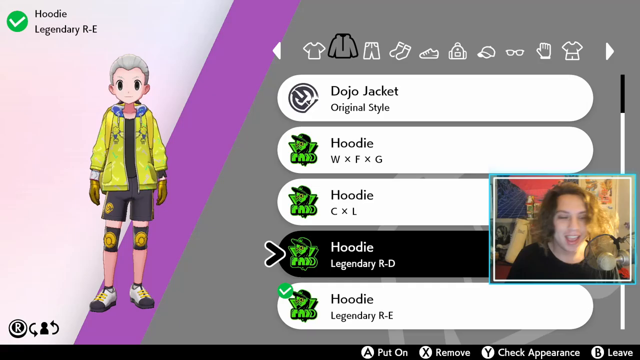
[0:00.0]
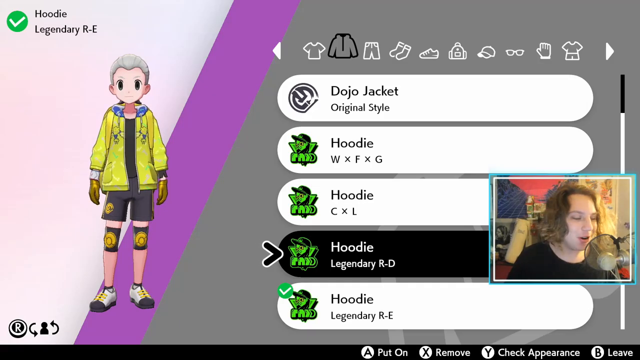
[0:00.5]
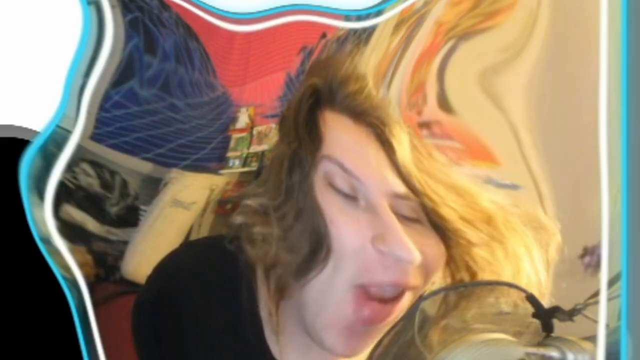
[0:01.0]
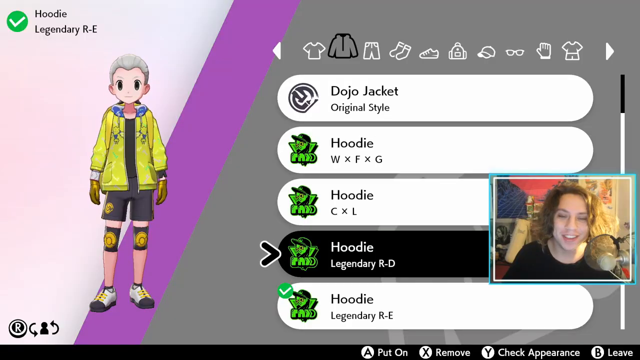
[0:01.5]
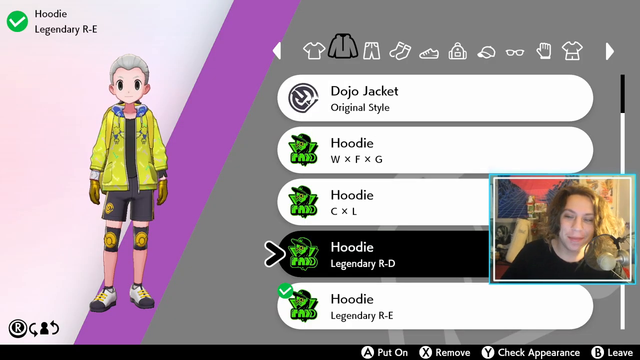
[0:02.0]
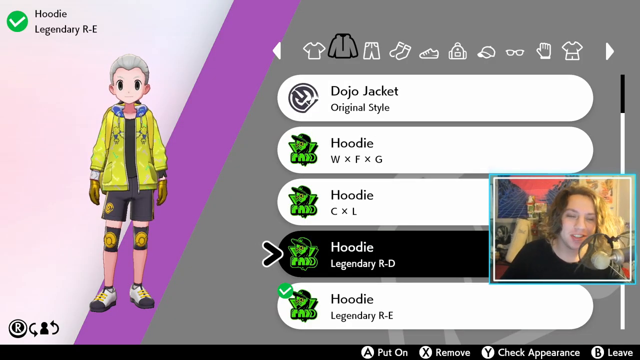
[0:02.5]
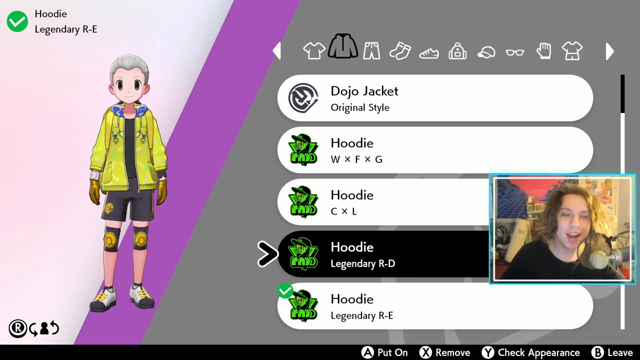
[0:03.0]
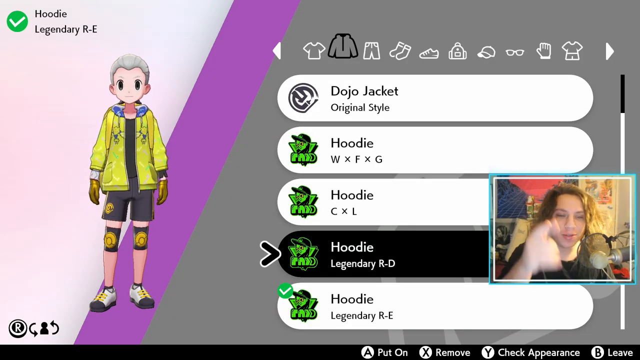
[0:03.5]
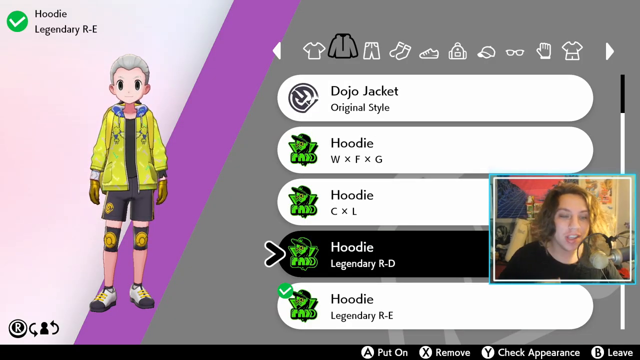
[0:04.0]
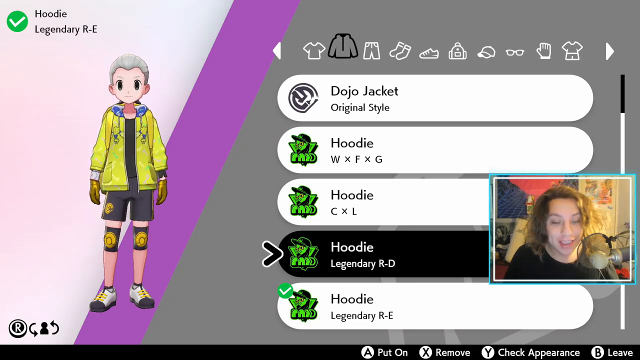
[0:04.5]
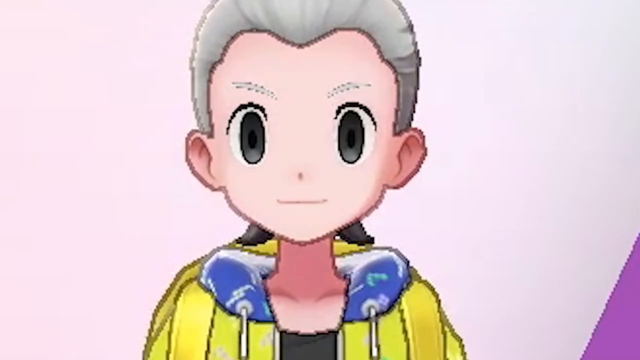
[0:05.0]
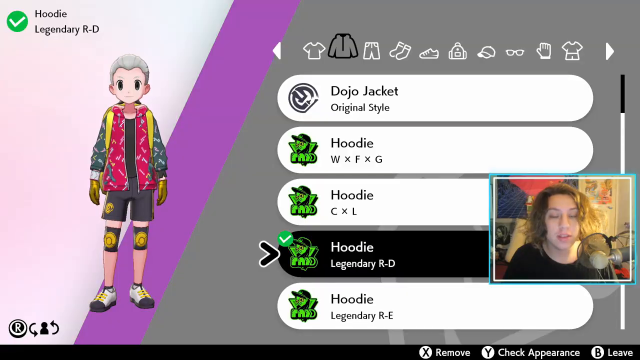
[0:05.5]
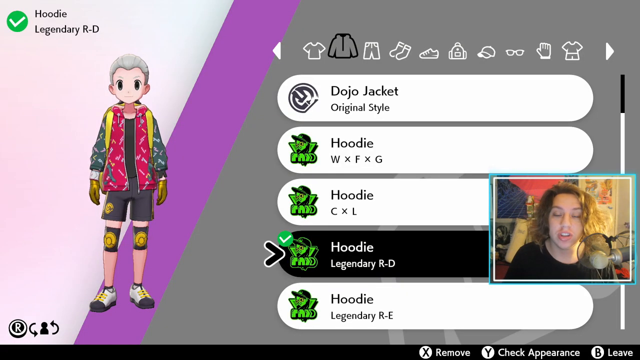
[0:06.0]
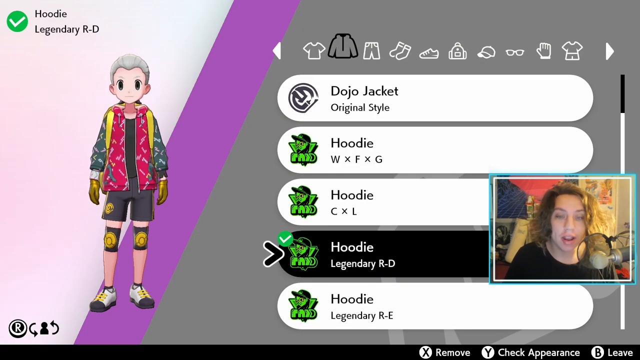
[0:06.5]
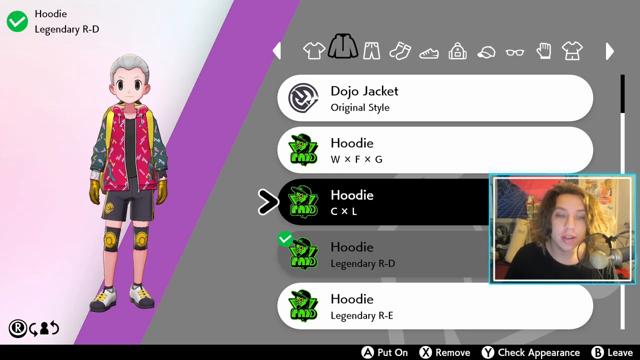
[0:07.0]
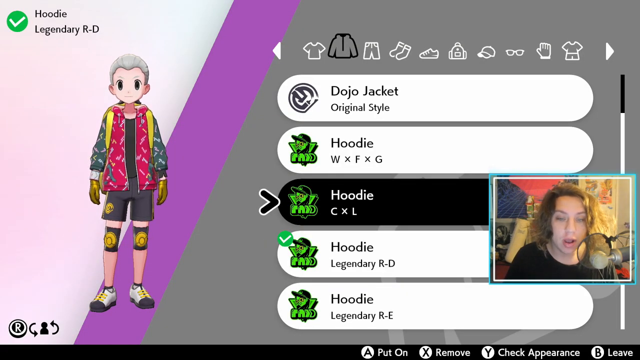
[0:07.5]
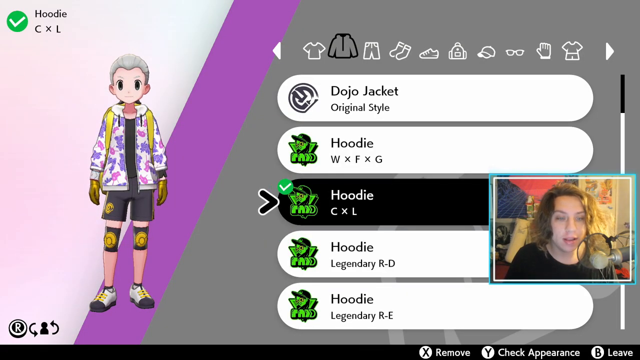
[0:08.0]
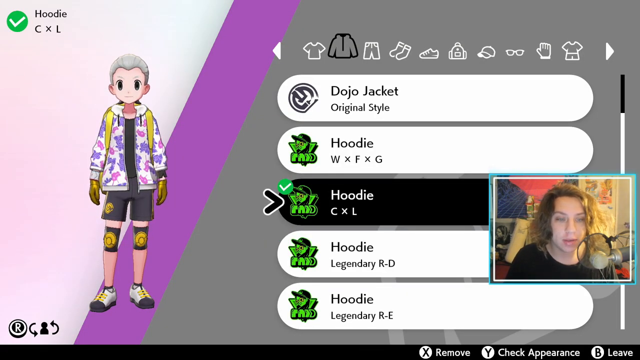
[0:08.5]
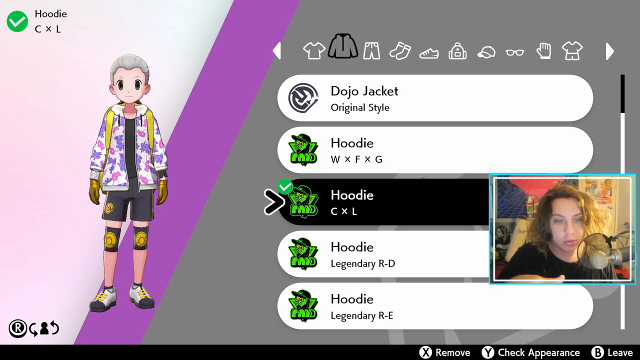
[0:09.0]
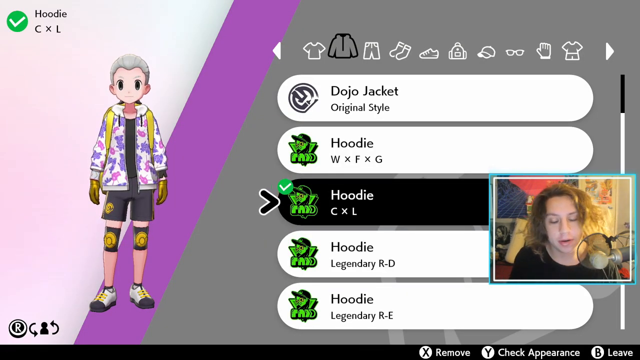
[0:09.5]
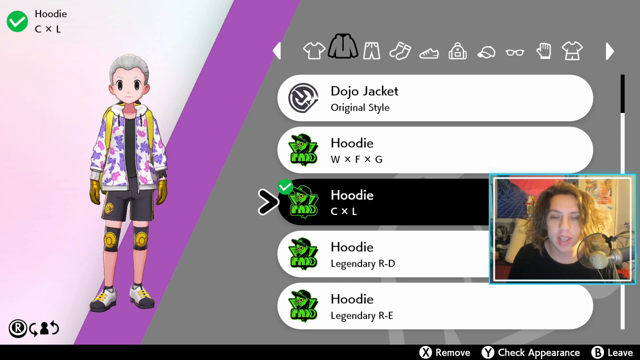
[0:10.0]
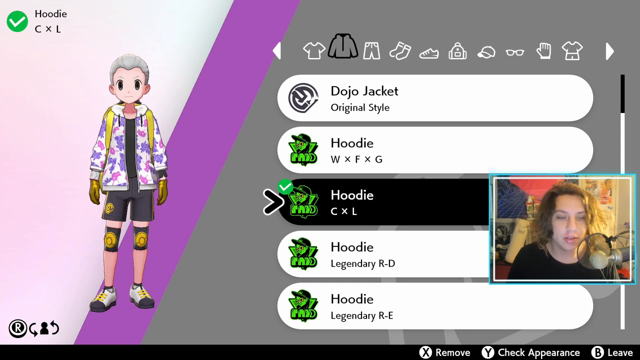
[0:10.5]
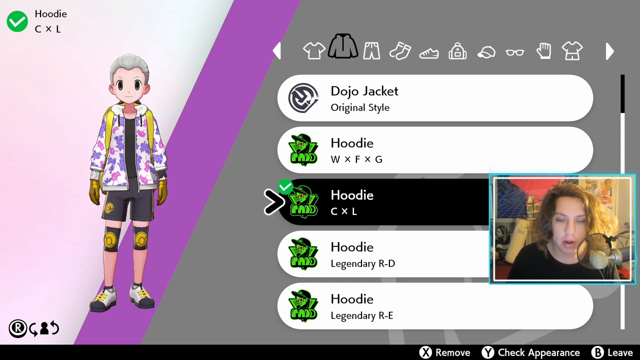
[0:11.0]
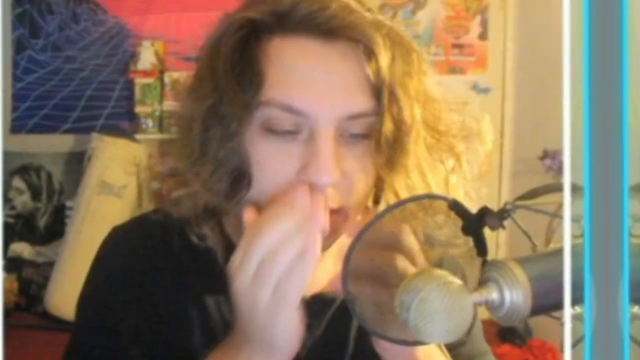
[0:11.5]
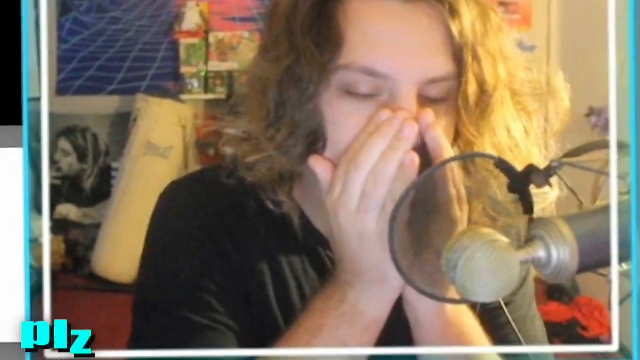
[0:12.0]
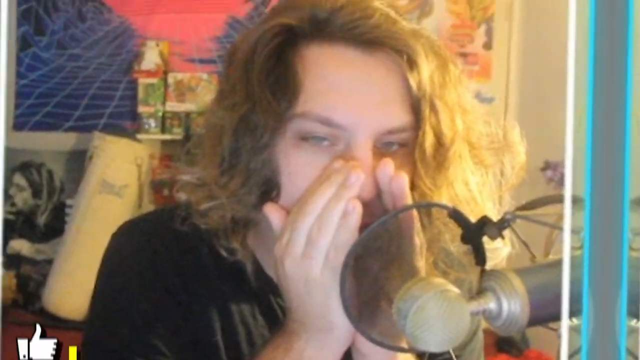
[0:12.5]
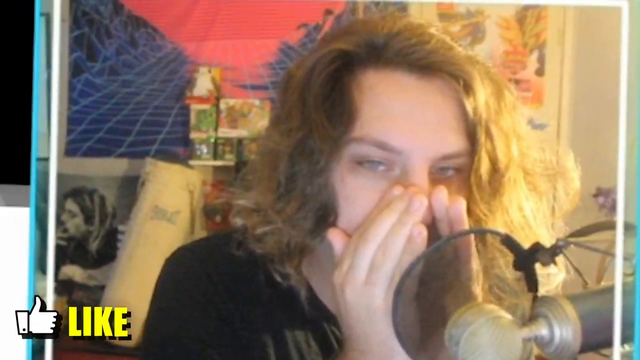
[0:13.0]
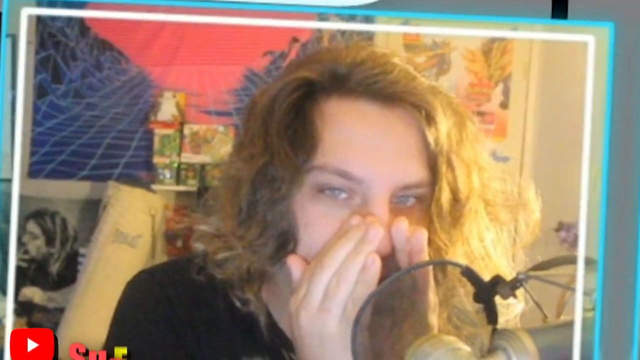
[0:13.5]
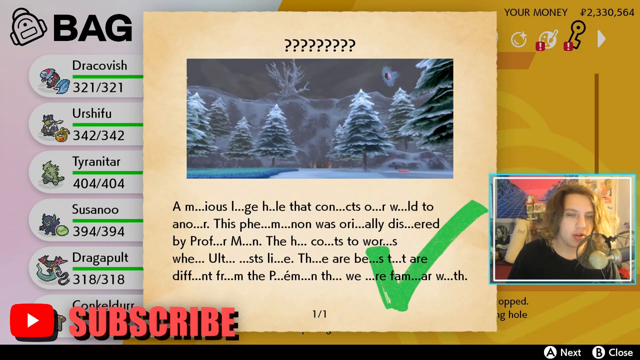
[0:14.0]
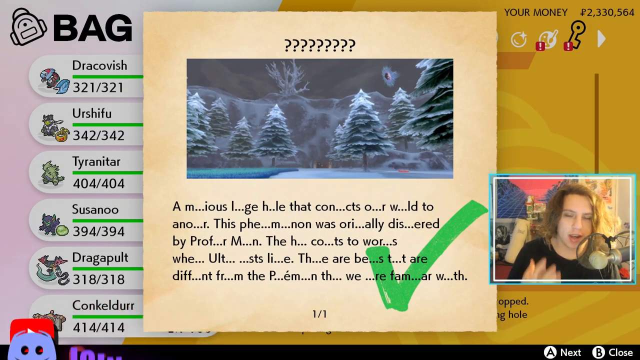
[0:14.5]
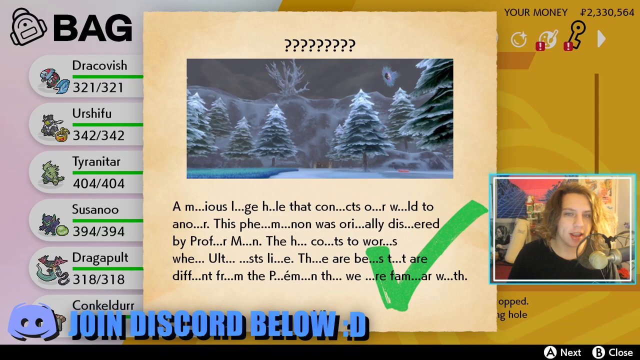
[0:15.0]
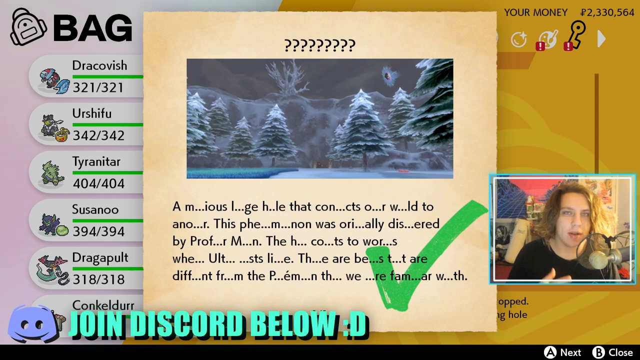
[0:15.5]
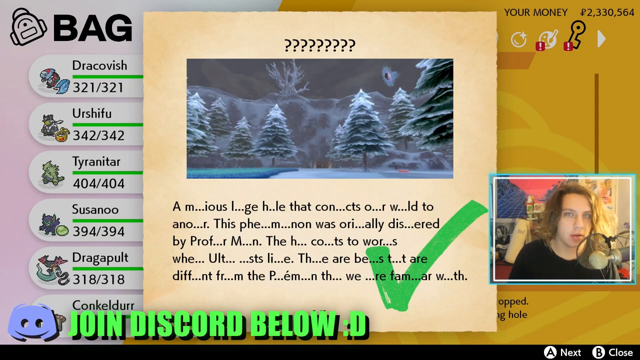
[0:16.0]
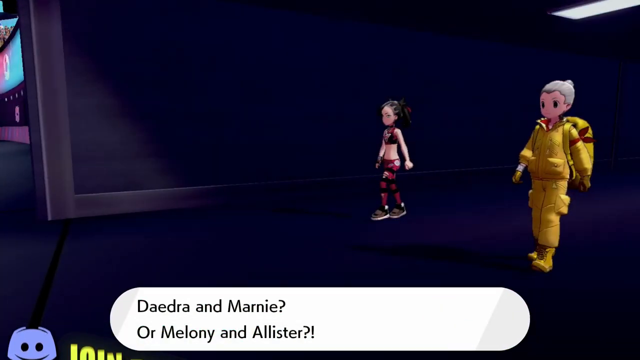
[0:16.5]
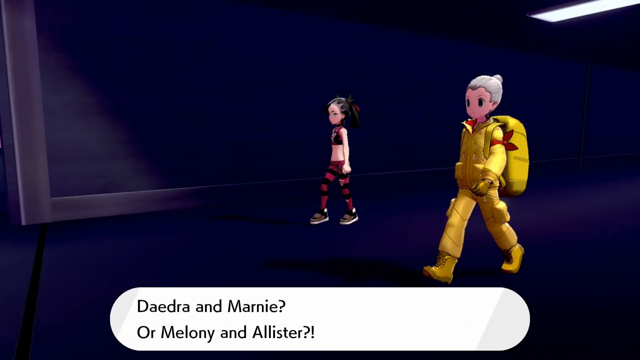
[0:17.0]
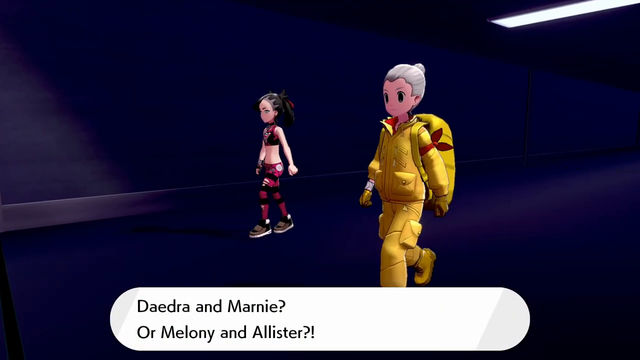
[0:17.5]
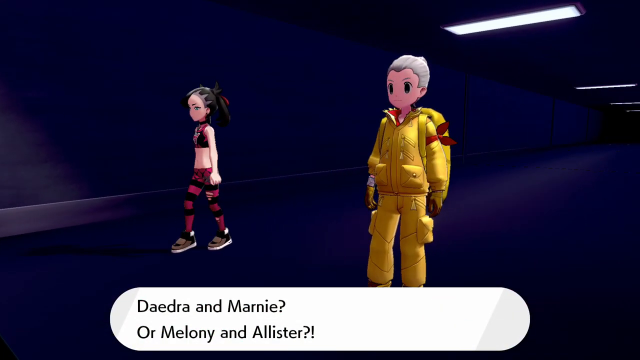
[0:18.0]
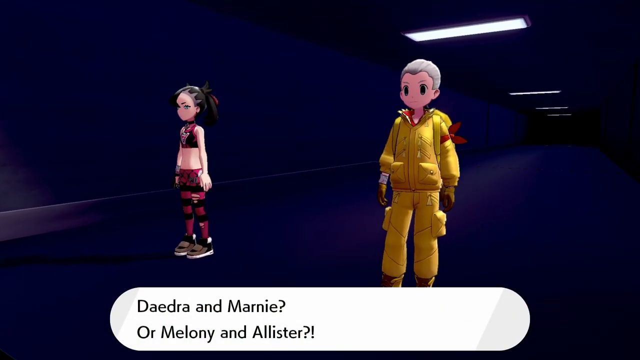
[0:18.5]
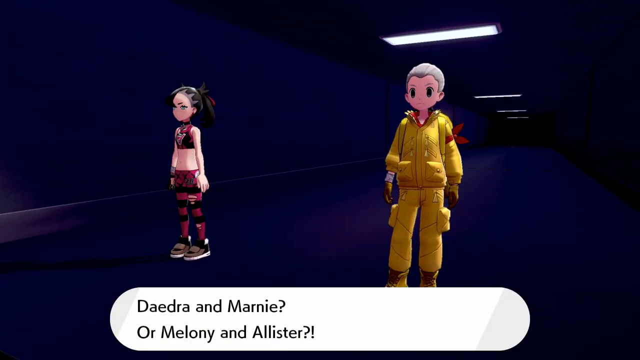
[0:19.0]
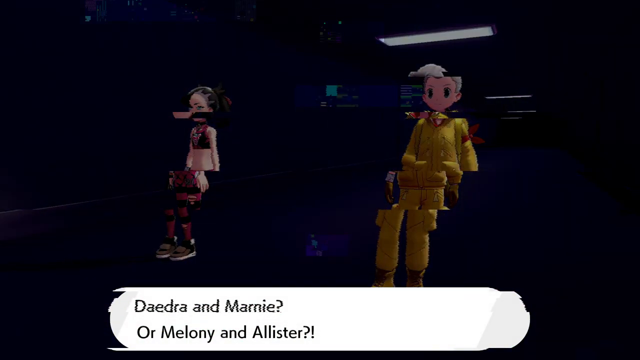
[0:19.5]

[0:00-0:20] A screen shows an animated anime character on the left-hand side, seen from the front, wearing a yellow jacket, with hands down at the sides and gray hair. In the top left is a green check mark with the text "hoodie" and "legendary RE," with small black text next to it. To the right are five categories: "dojo jacket," "hoodie," "hoodie," "hoodie," and "hoodie." The player appears to have selected the bottom option. A small window on the right-hand side apparently shows a YouTuber. The user seems to be customizing the character's wardrobe. The character continues to speak into the microphone and points at the camera with his right index finger. The character has hair past ear length on both sides. The middle option is selected, and the hoodie changes to more of a purple and pink camouflage pattern. The screen changes to a map with trees and lots of different letters and dots in the text, along with a green check mark. The screen then changes to two animated characters walking down, with text naming "Deadra" and either "Marnie" or "Melanie," and "Alistair."